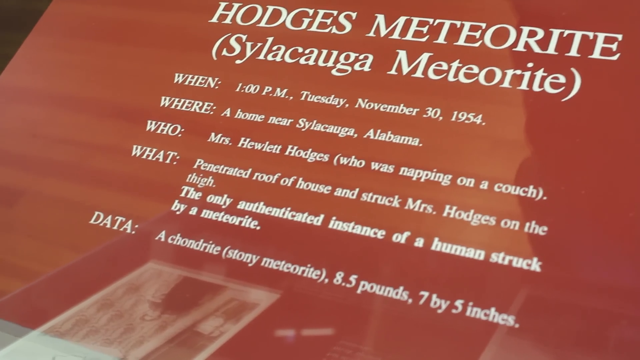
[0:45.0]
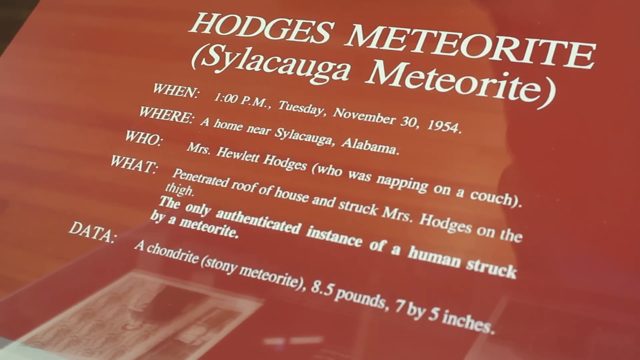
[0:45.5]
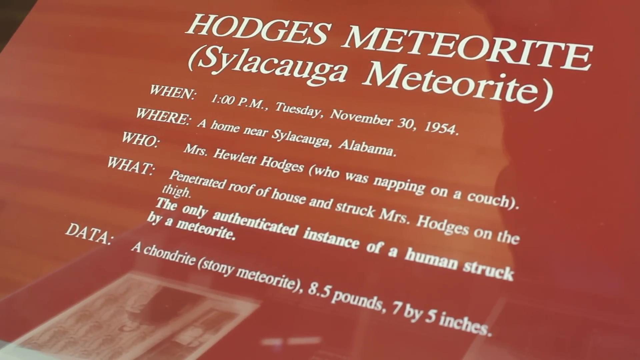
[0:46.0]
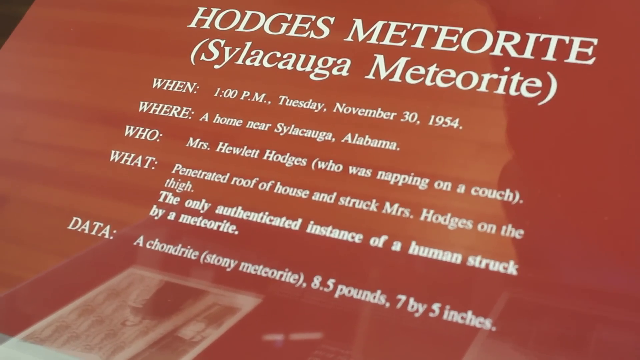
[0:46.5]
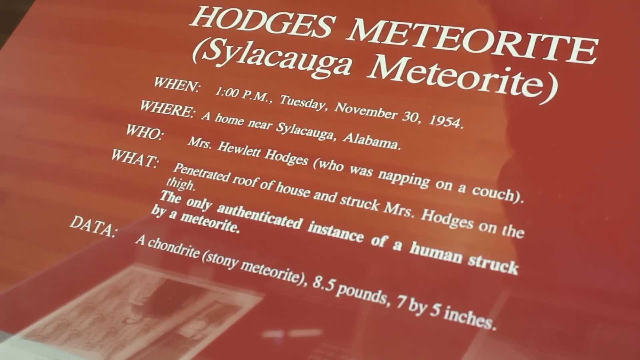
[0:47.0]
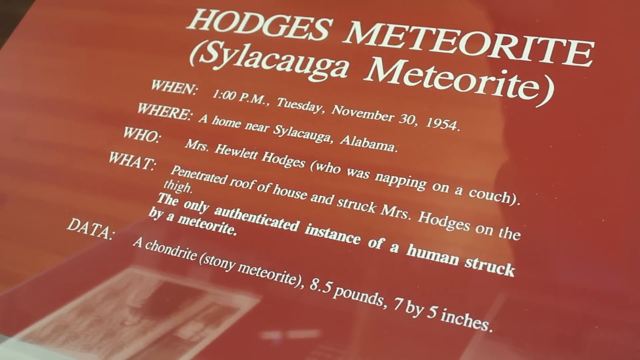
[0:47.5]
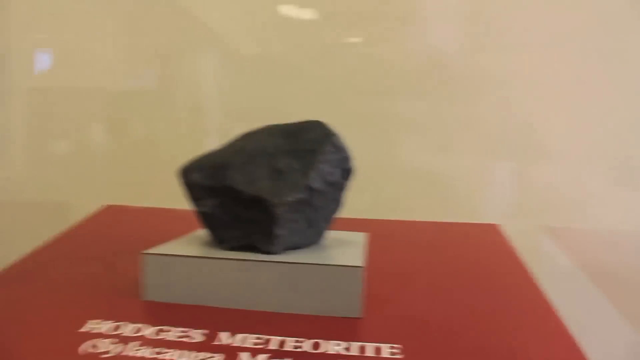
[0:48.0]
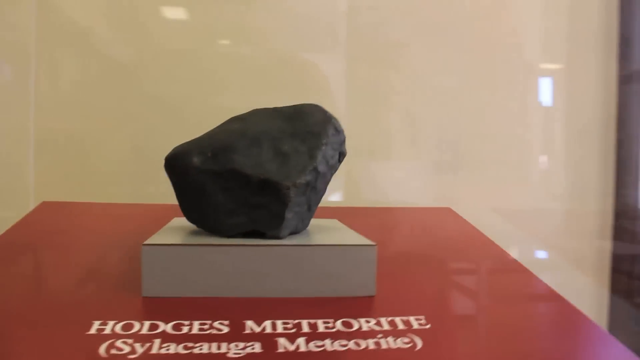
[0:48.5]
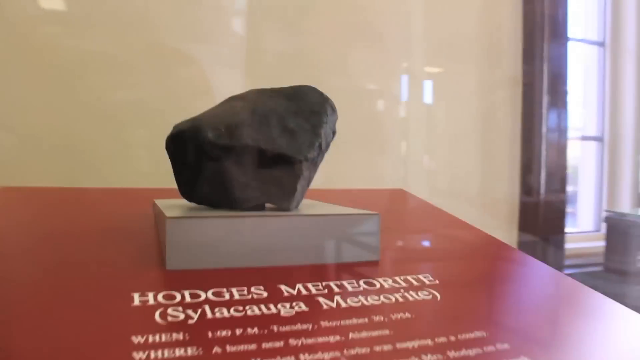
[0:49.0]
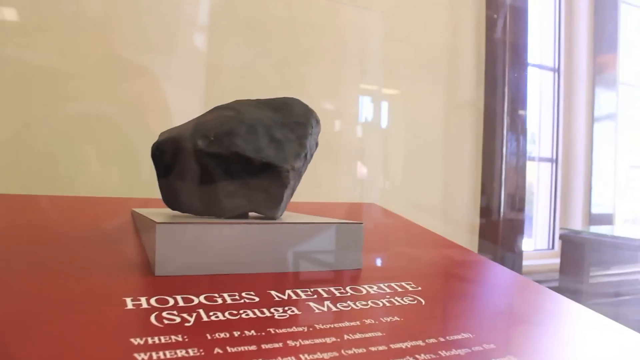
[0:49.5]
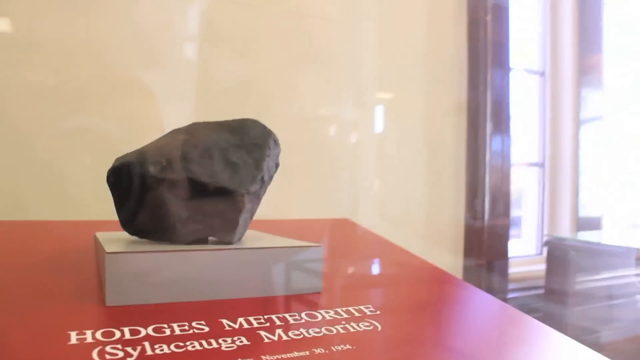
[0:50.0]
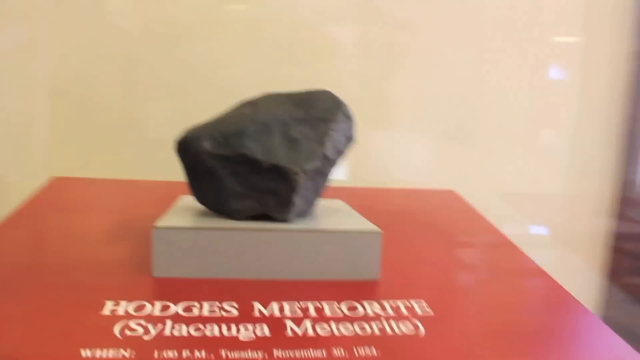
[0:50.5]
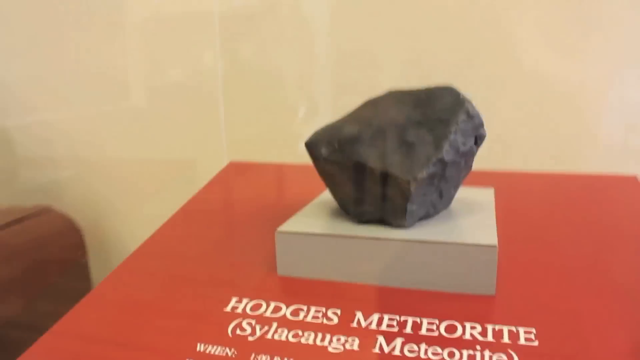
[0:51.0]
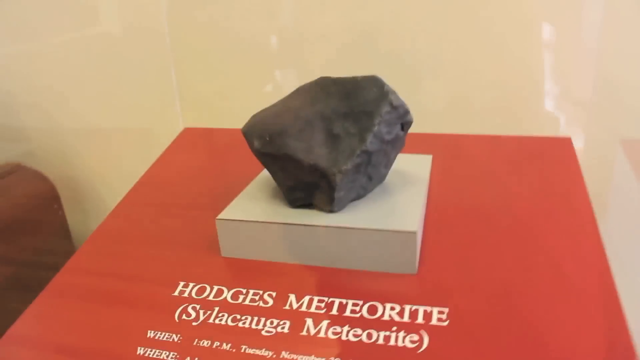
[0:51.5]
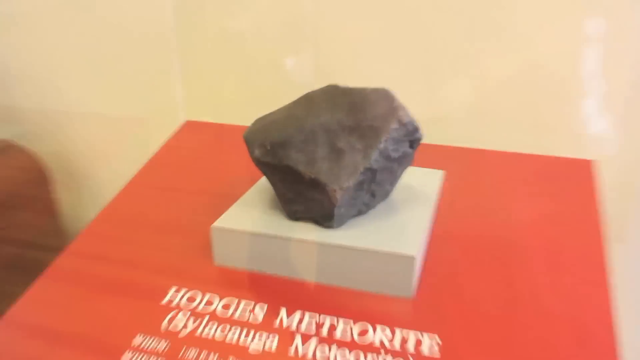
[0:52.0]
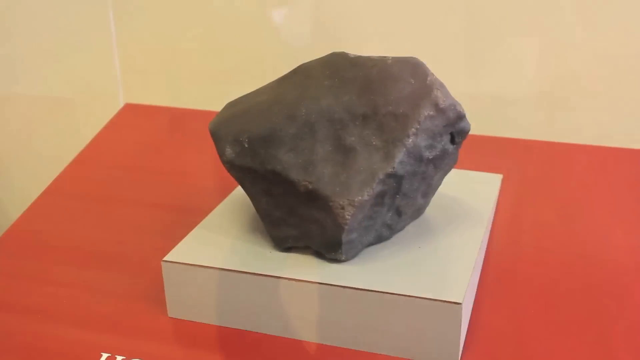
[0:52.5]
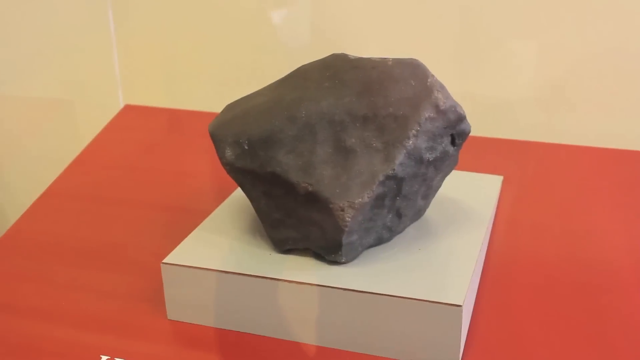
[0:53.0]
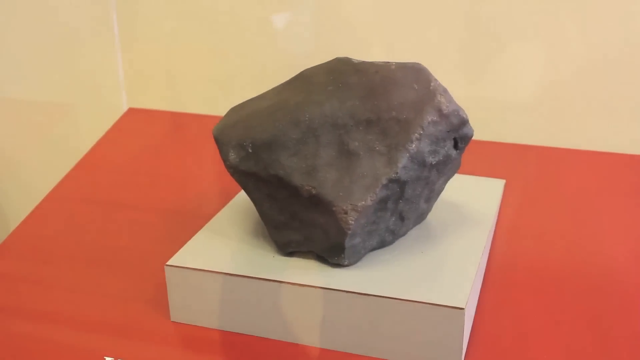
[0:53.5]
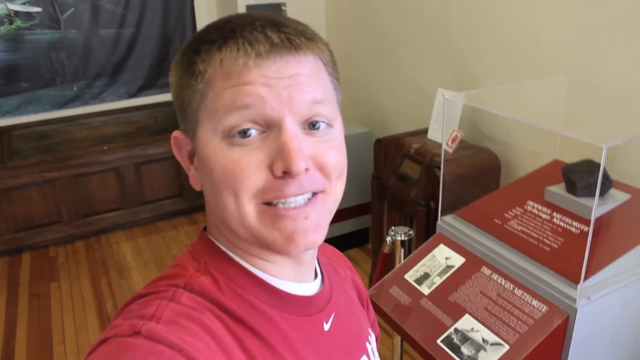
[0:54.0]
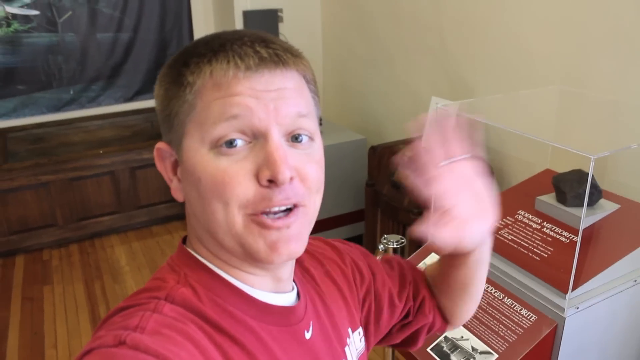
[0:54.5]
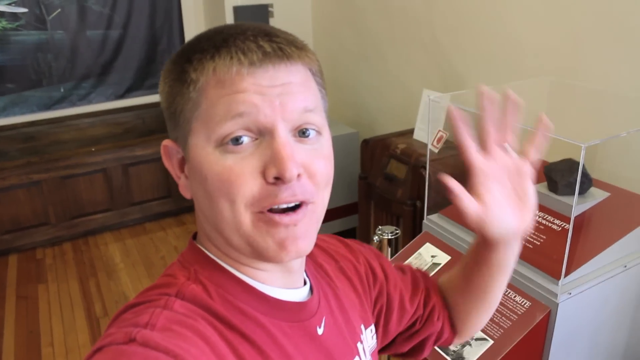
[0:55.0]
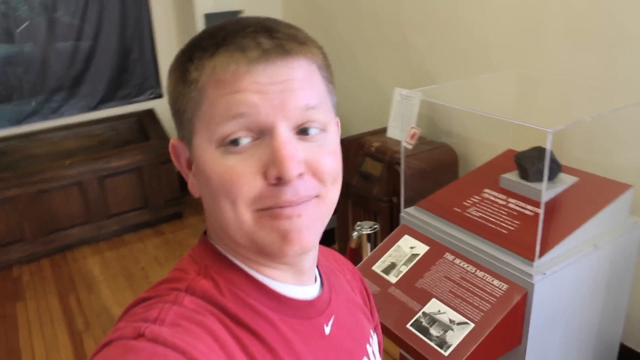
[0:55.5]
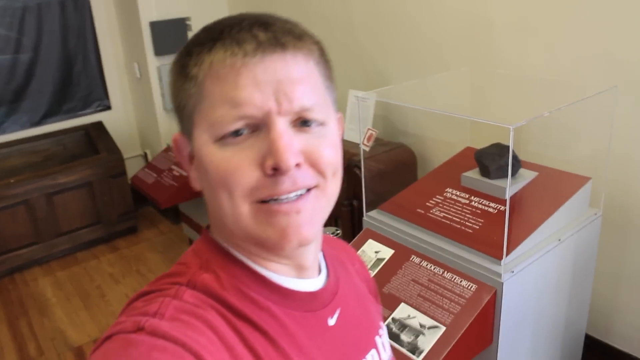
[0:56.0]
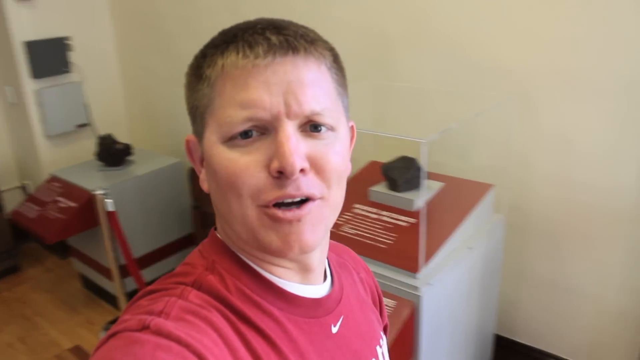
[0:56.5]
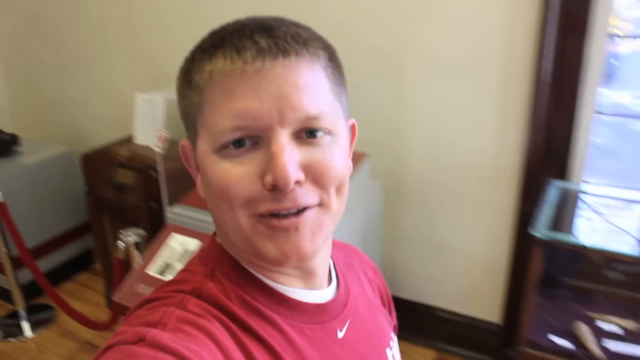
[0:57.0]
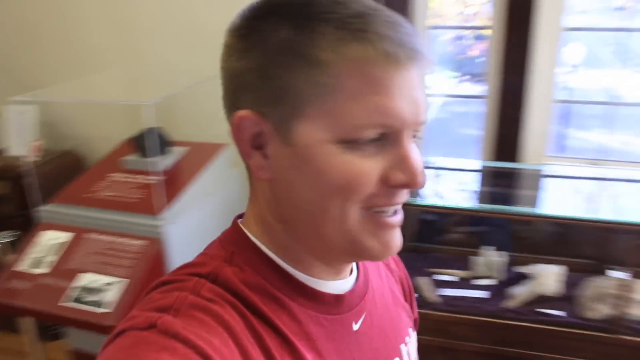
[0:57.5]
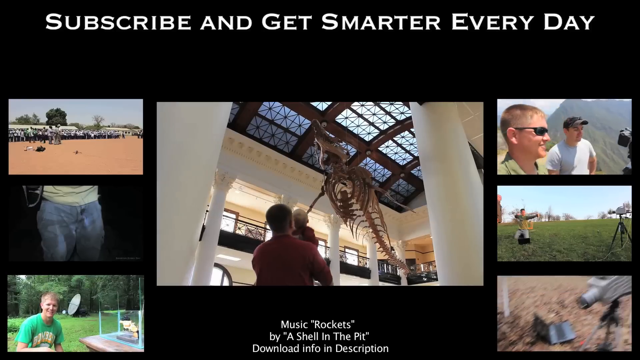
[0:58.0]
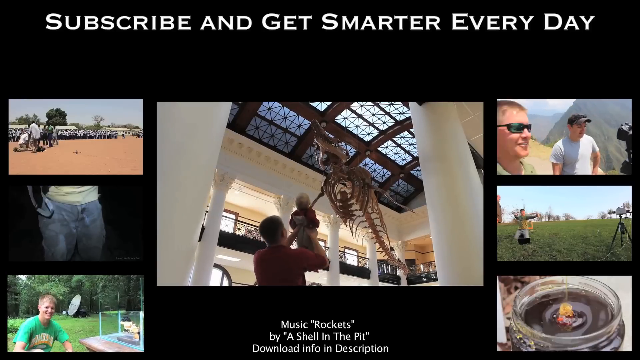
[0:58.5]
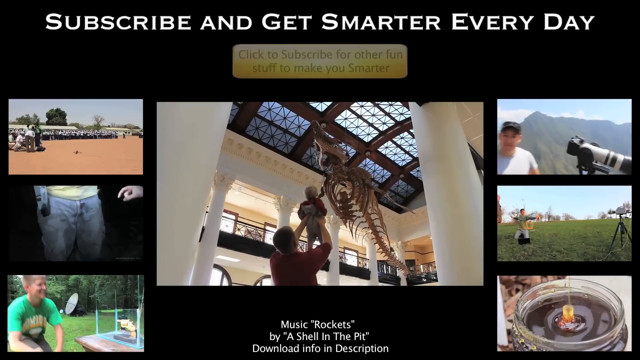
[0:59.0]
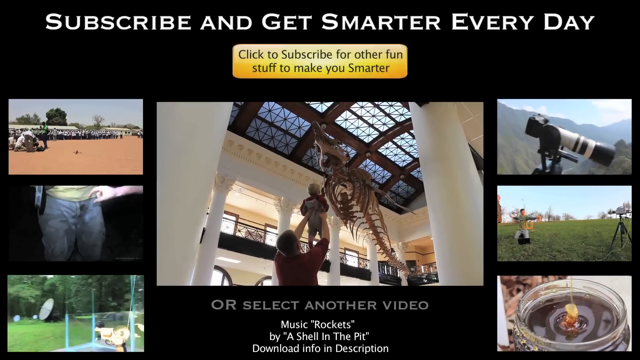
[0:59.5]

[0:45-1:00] A picture shows the writing under the meteorite, then the rock, presumably the meteorite, and the man talking. Someone holds up a baby toward dinosaur bones. The meteor rock and the talking man return, then the image kind of slides over to show a man holding up a baby toward the dinosaur bones again. The writing on the display for the meteor appears again, then the rock and the man talking; he kind of waves his hand, and the image switches back. The center picture is a man holding a baby toward a dinosaur, with smaller screens showing other pictures surrounding it. The meteor and the man sort of waving return, and then there is a picture of the screen with a bus on the left-hand side.